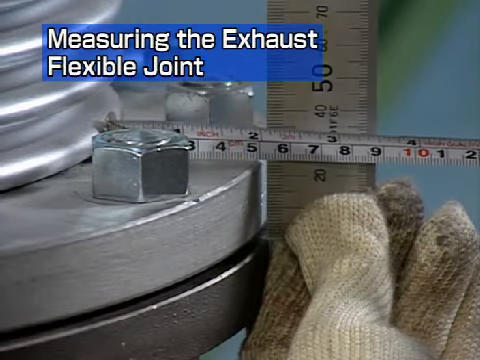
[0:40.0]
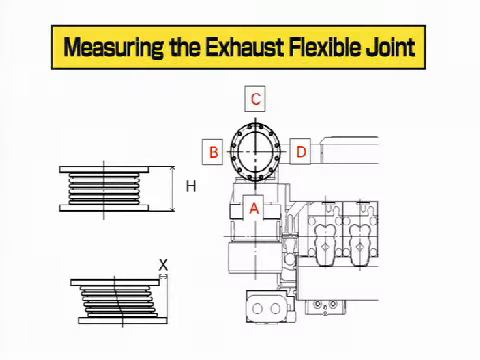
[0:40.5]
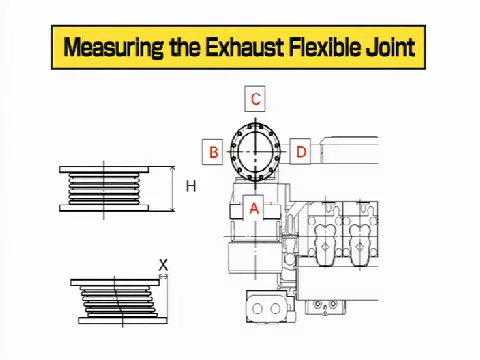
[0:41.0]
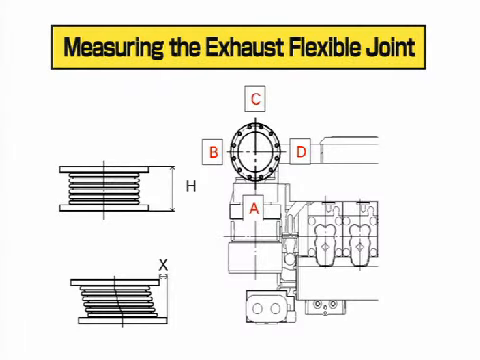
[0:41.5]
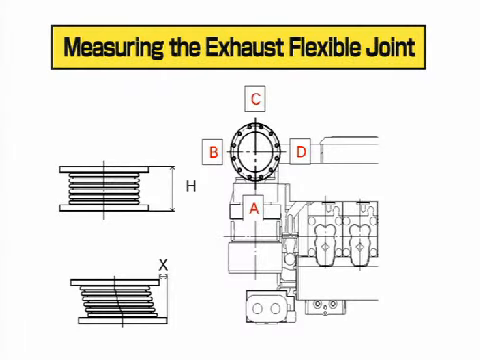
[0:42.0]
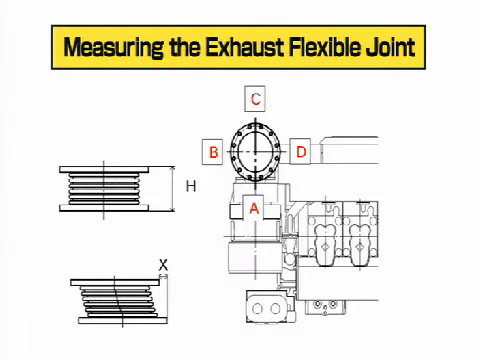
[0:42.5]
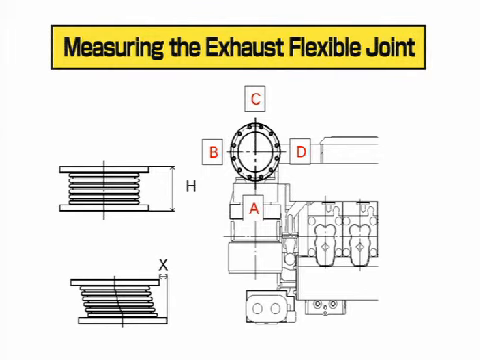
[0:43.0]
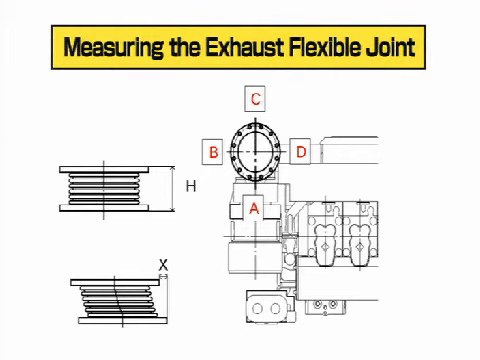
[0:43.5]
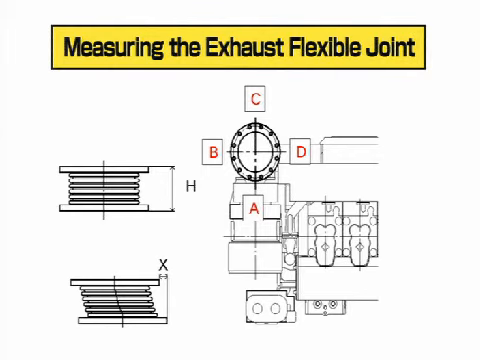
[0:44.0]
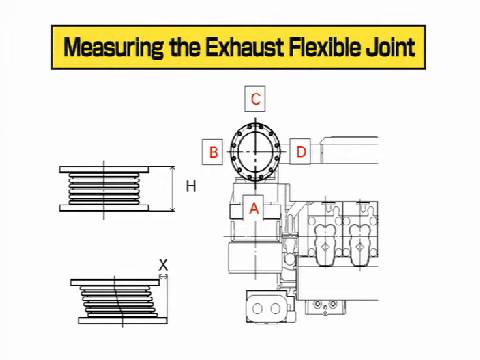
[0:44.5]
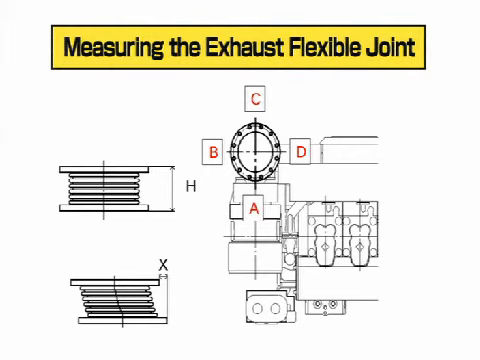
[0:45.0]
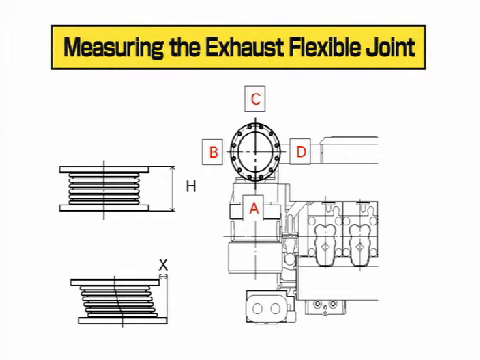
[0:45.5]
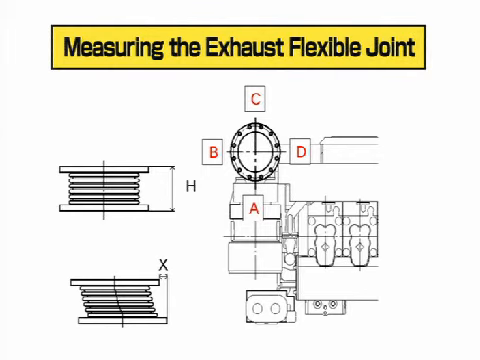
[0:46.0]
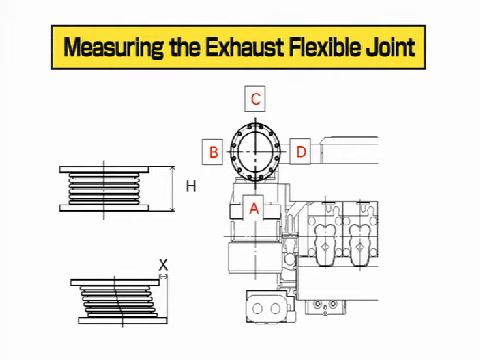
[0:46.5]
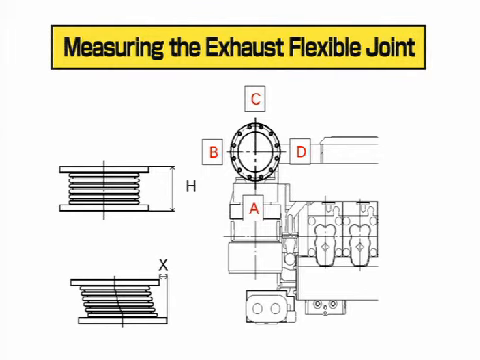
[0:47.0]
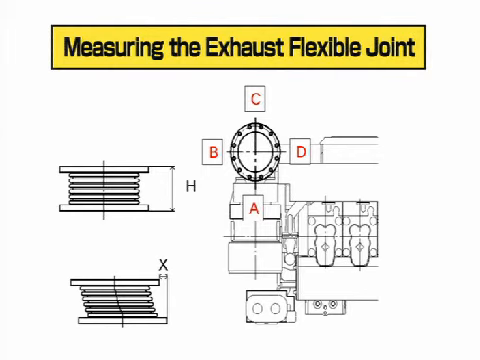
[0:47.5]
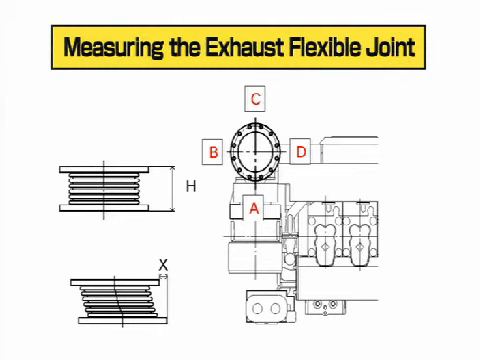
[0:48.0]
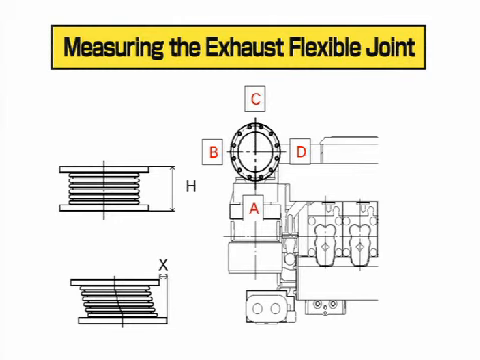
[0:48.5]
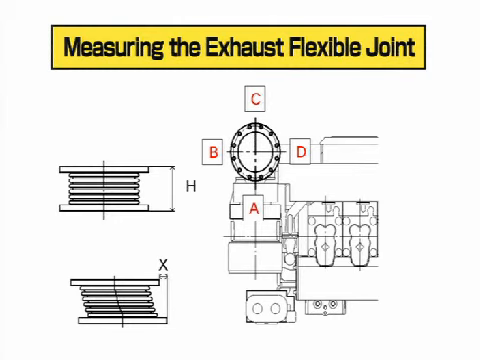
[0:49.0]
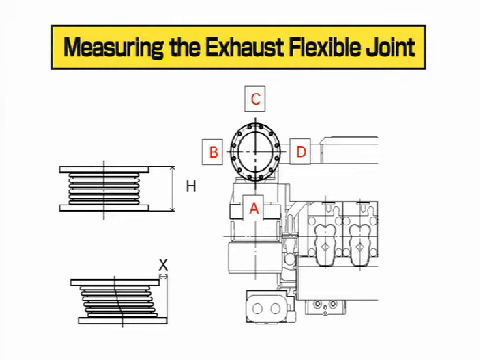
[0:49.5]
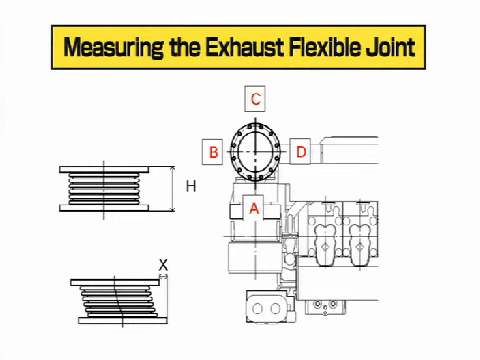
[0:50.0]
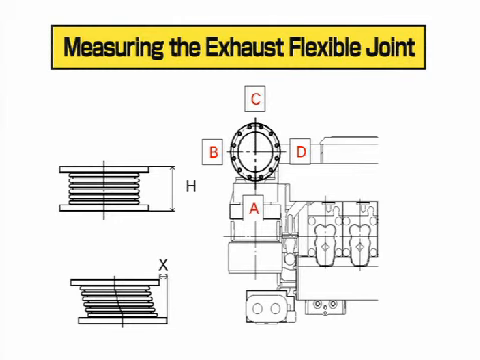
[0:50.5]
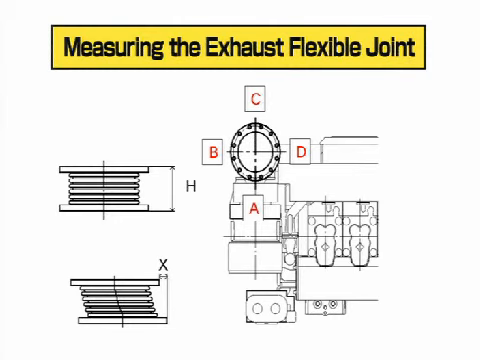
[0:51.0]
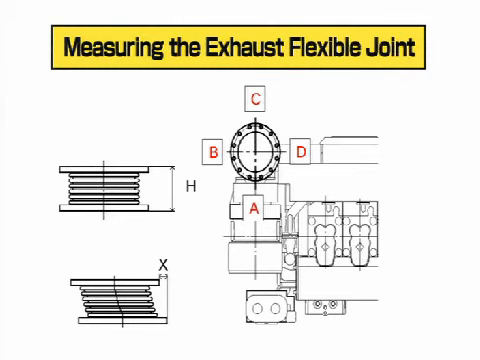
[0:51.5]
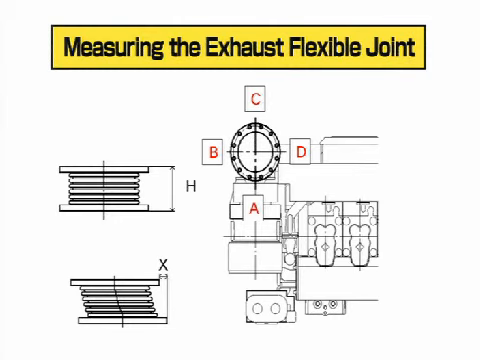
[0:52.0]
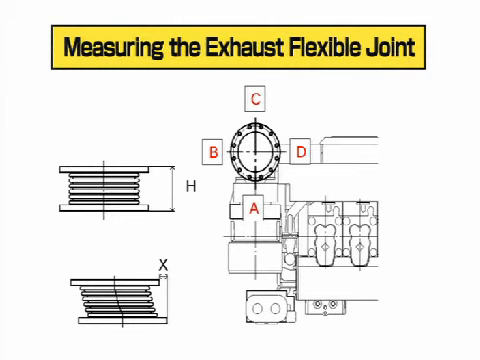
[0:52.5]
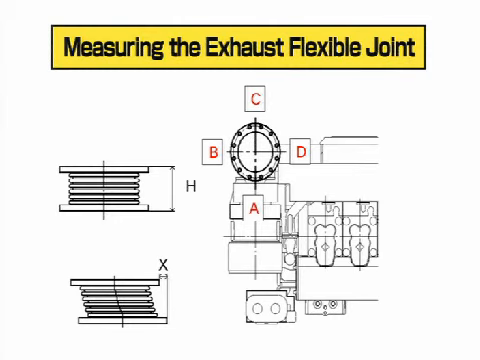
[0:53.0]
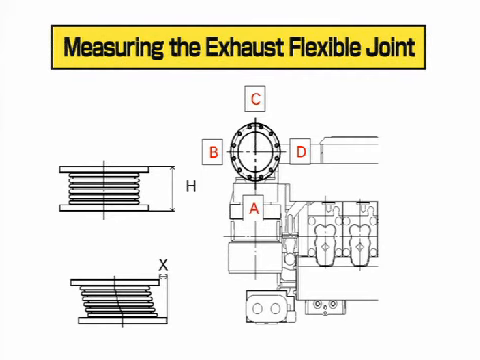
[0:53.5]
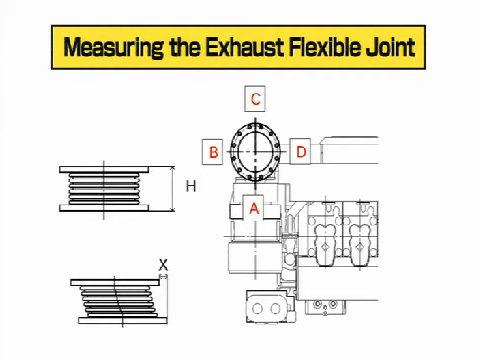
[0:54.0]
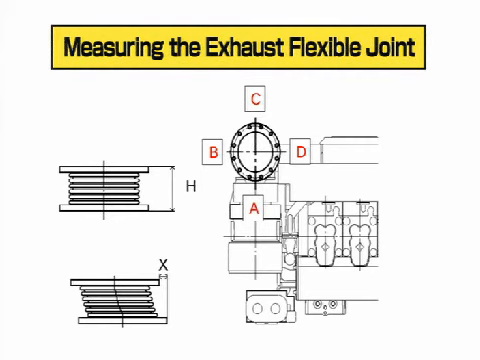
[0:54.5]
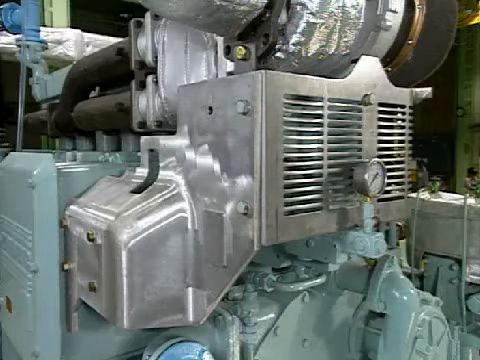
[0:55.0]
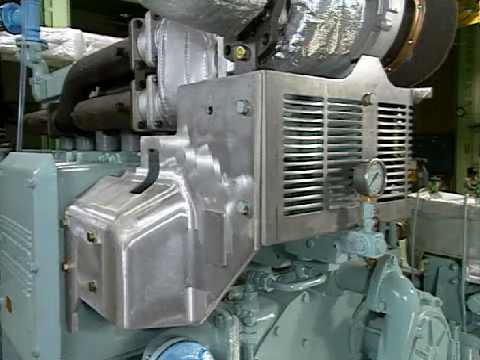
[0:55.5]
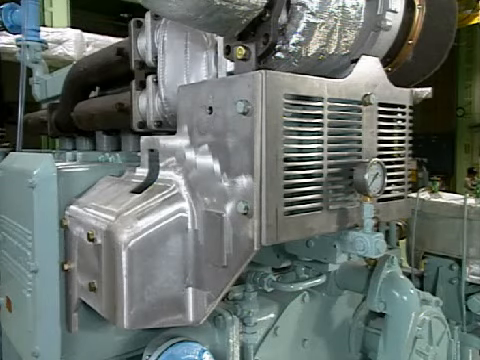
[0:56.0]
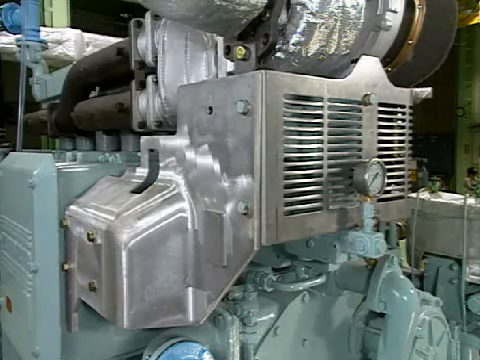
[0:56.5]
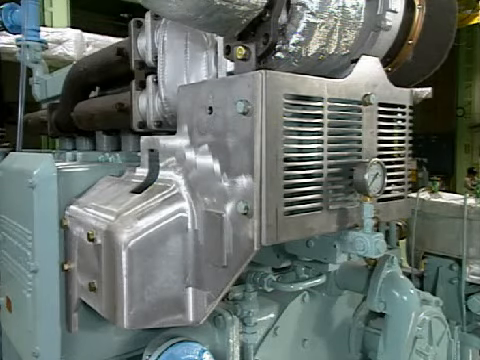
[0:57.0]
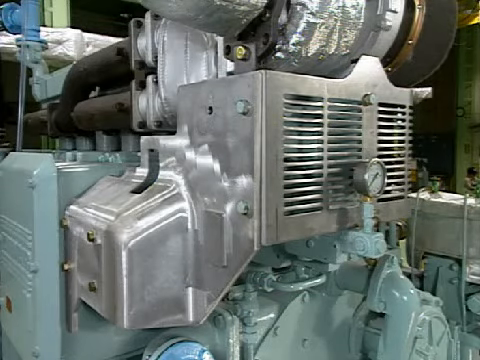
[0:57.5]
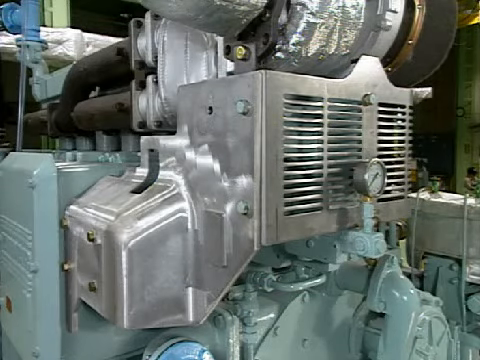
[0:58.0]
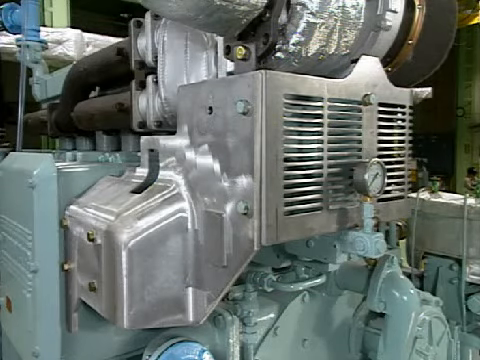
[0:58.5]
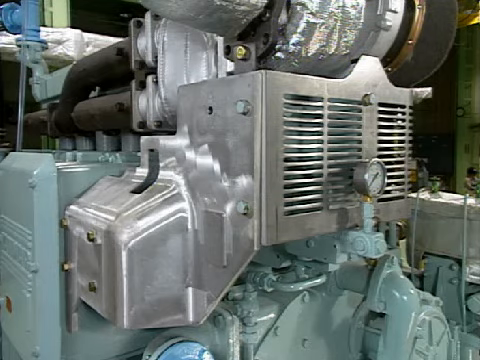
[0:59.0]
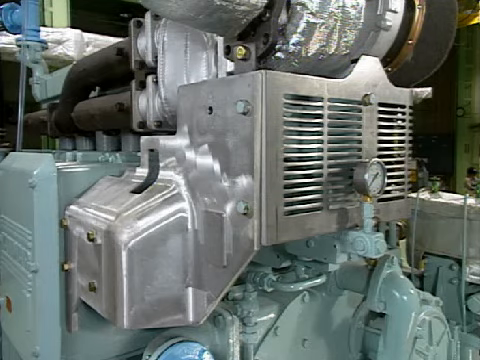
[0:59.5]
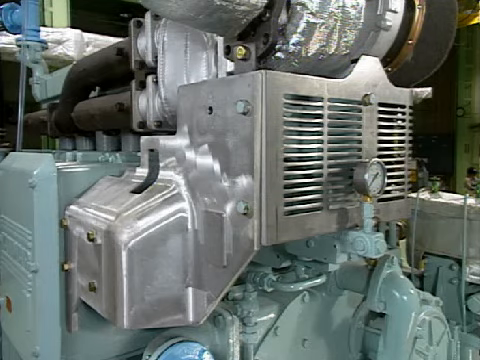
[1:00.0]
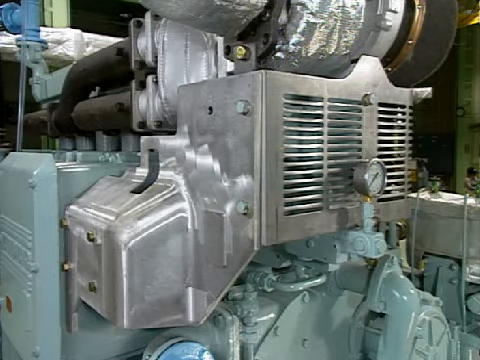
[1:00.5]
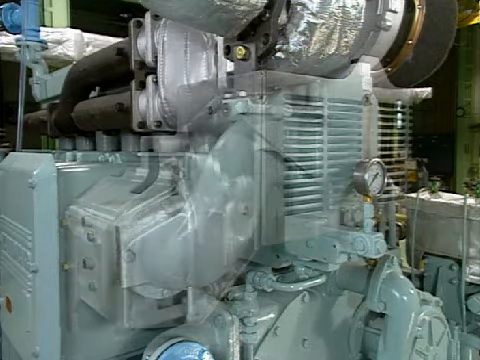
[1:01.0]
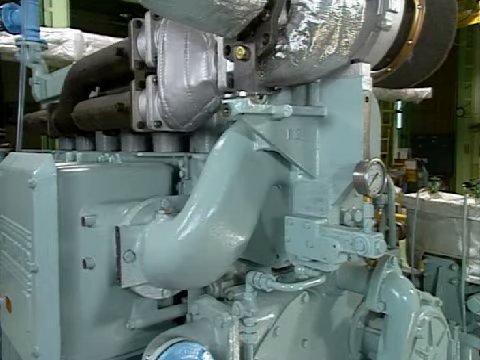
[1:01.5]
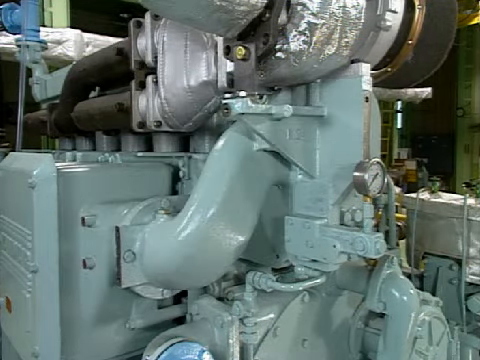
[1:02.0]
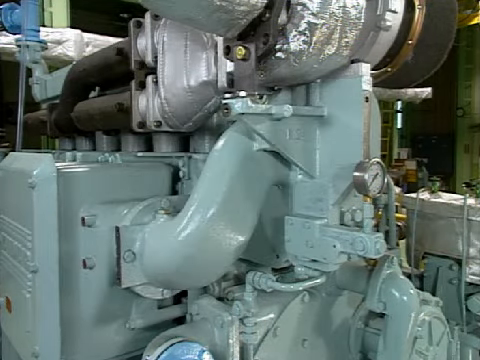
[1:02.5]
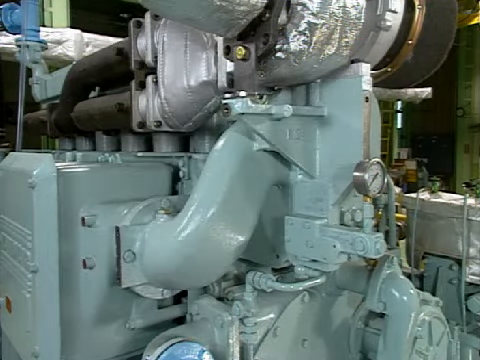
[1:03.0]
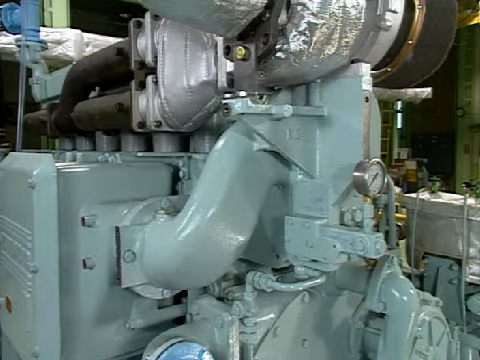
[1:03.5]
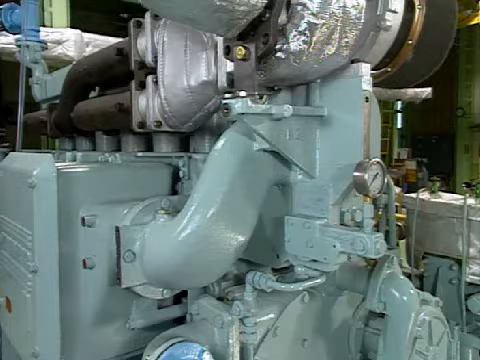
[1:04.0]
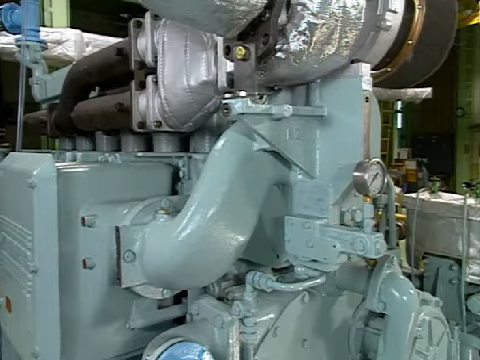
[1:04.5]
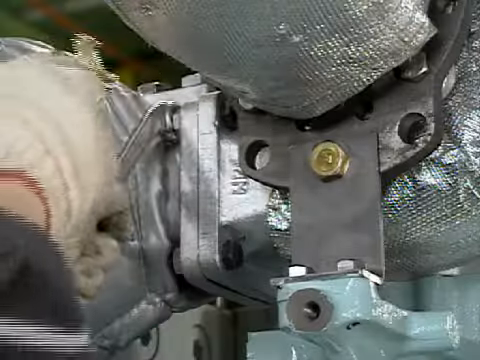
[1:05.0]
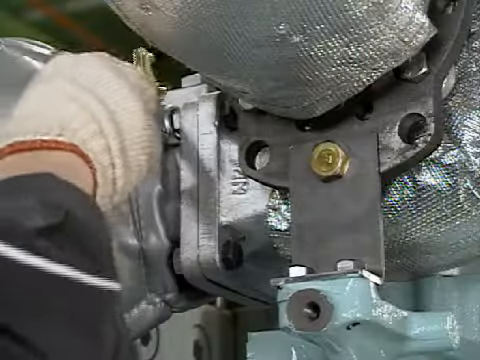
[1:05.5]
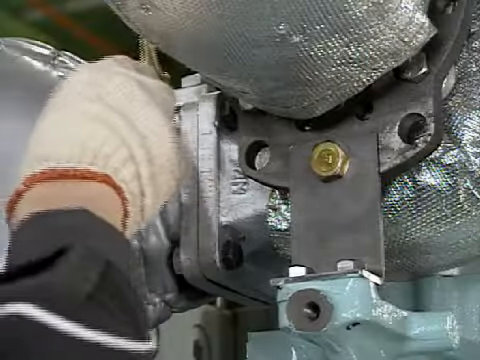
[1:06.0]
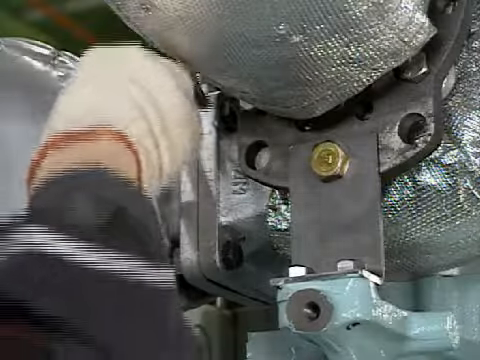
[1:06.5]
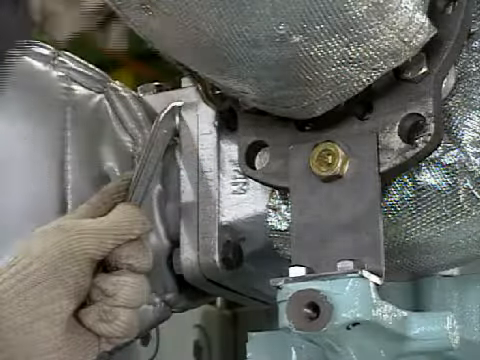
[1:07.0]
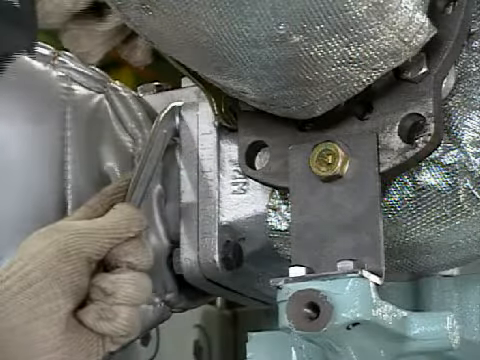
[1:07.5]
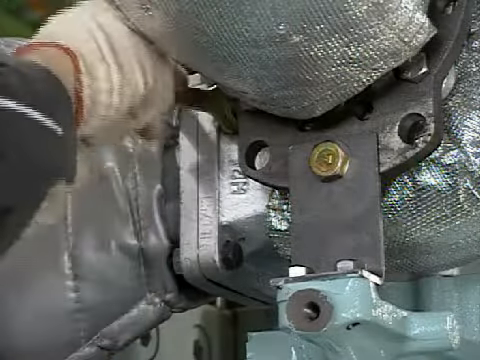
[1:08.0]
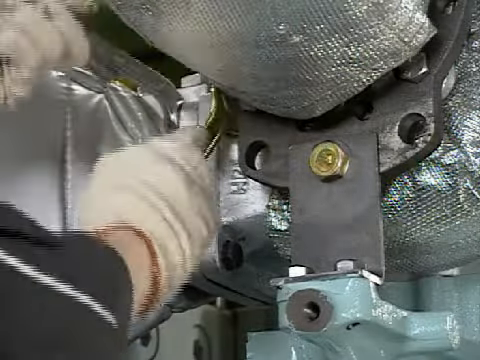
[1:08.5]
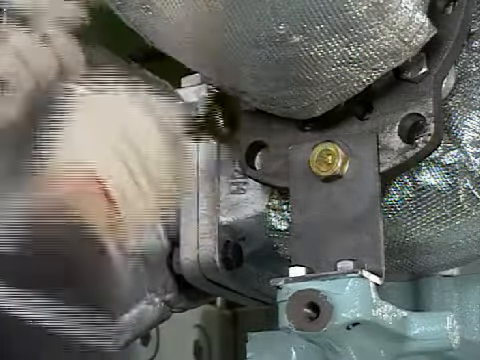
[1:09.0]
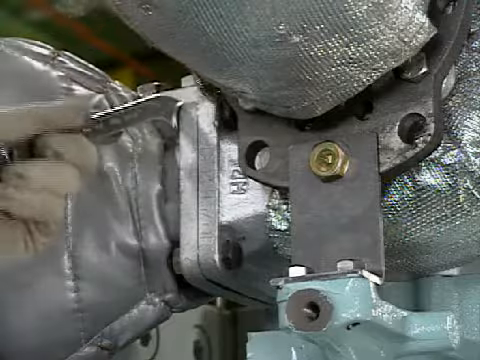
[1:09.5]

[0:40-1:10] The size of the flexible exhaust is measured with a ruler. A map shows how the flexible exhaust works with the joints, marked with the letters A, B, C and D, with X and H explanations. The gigantic machine is shown disassembled and assembled. There is a demonstration of how to remove bolts and nuts that are pressed in the middle of several corners and parts that are difficult to locate, and of how the maintenance should be done.